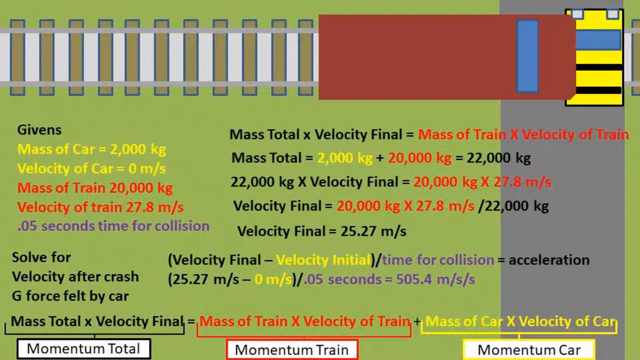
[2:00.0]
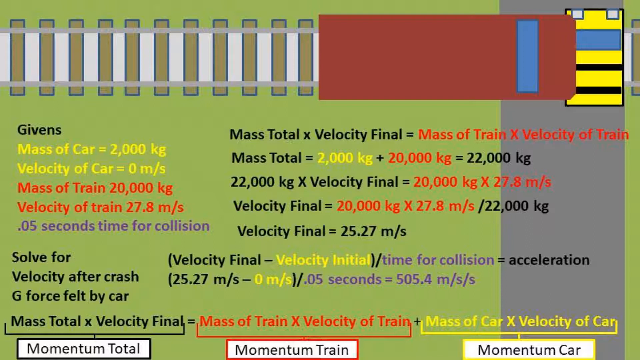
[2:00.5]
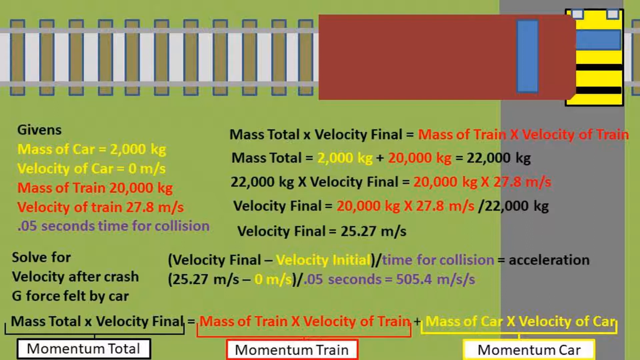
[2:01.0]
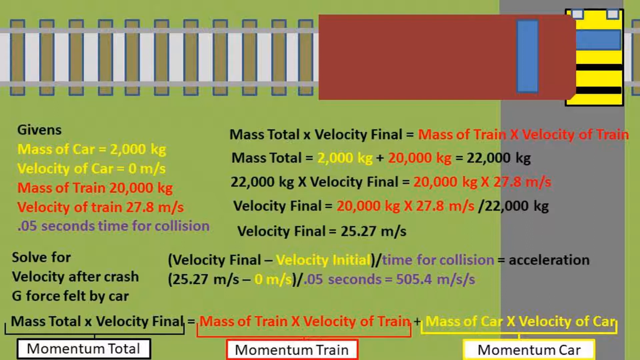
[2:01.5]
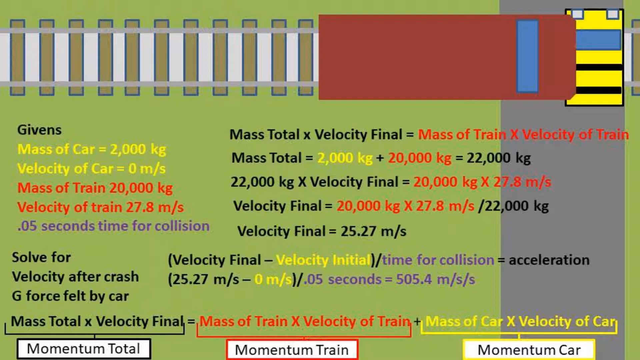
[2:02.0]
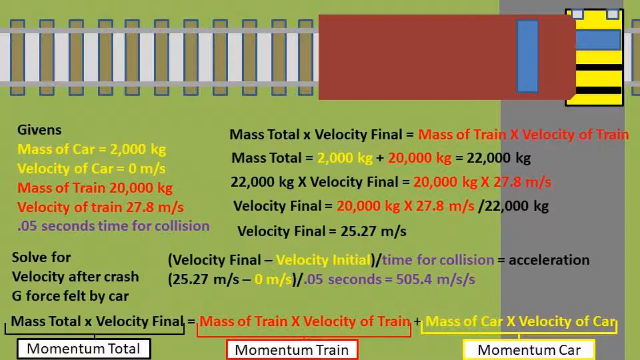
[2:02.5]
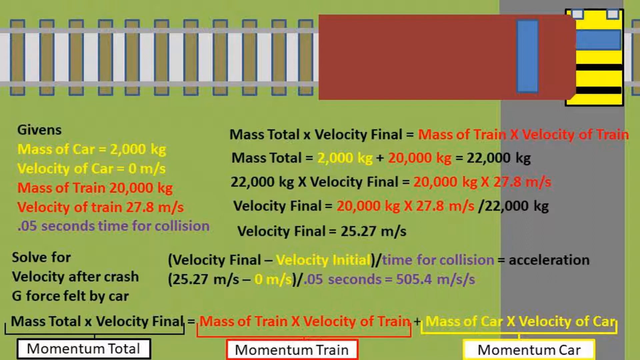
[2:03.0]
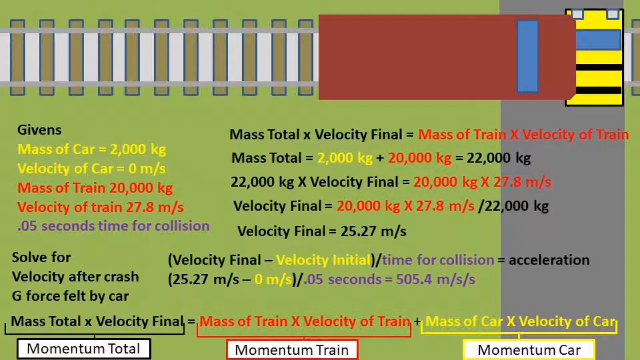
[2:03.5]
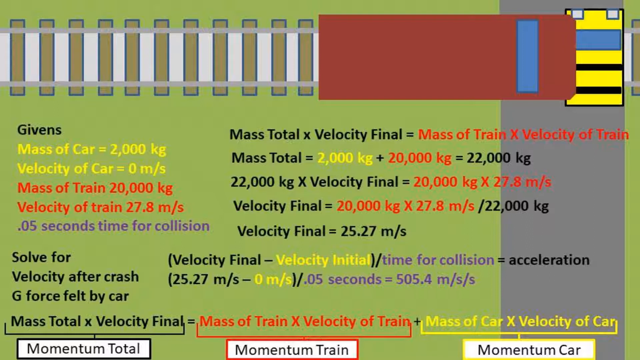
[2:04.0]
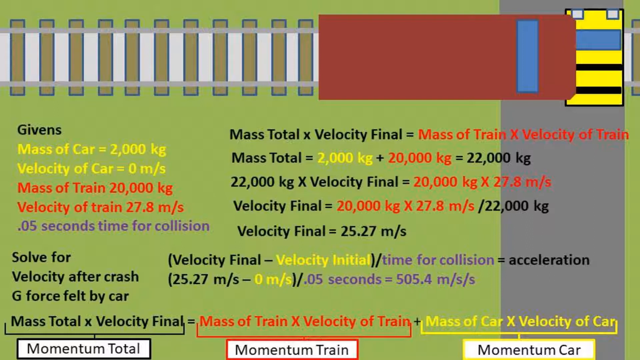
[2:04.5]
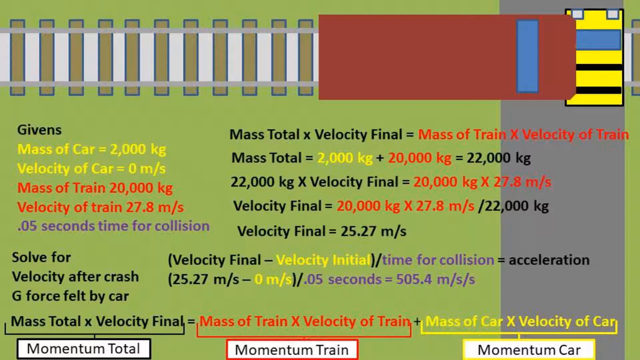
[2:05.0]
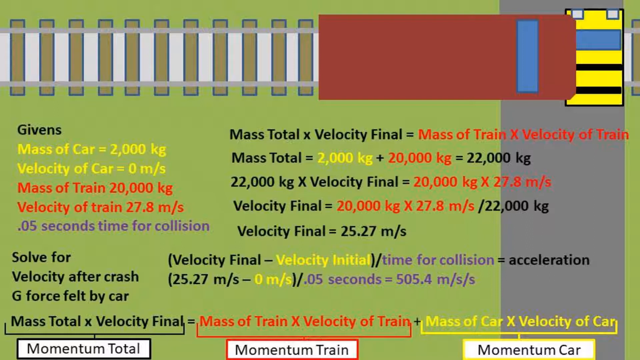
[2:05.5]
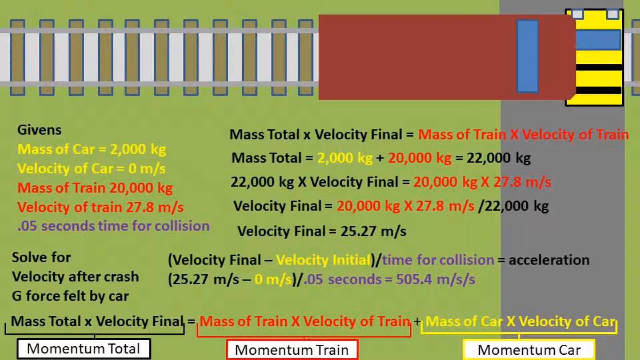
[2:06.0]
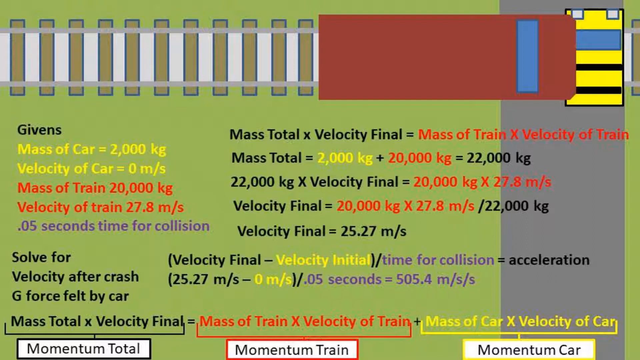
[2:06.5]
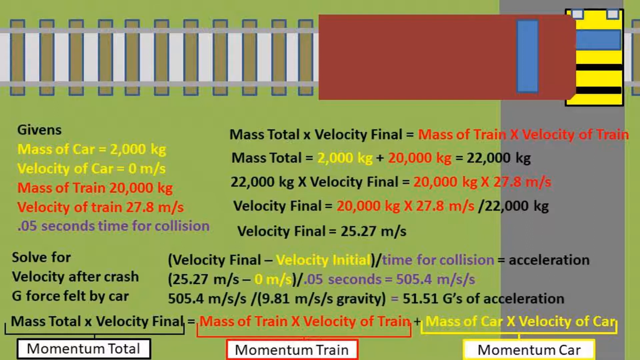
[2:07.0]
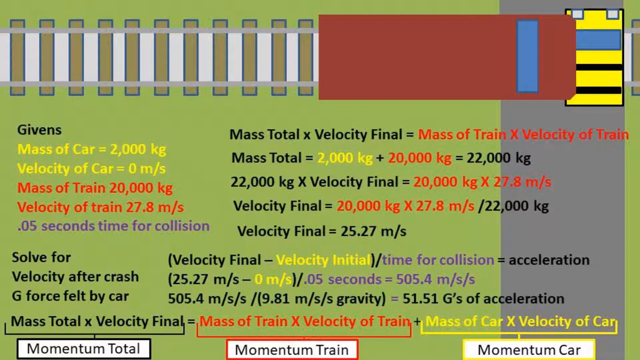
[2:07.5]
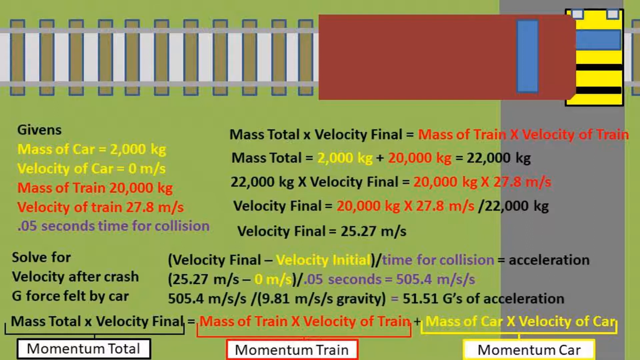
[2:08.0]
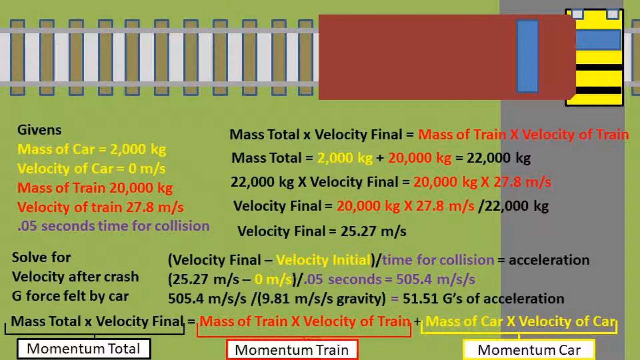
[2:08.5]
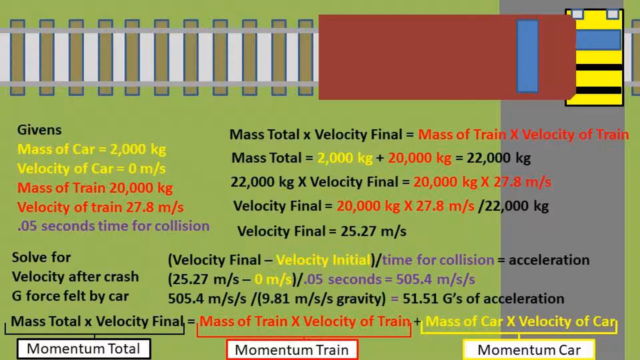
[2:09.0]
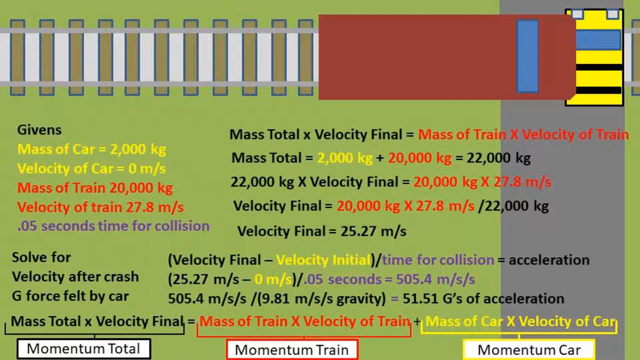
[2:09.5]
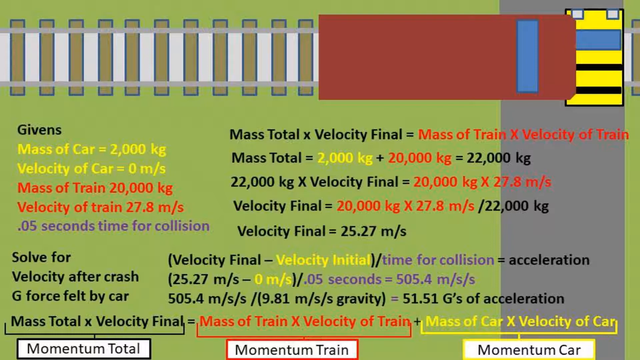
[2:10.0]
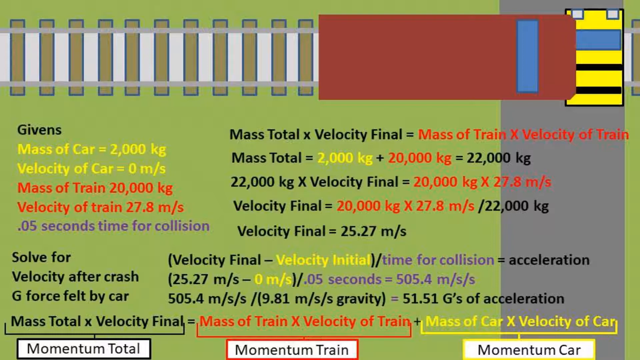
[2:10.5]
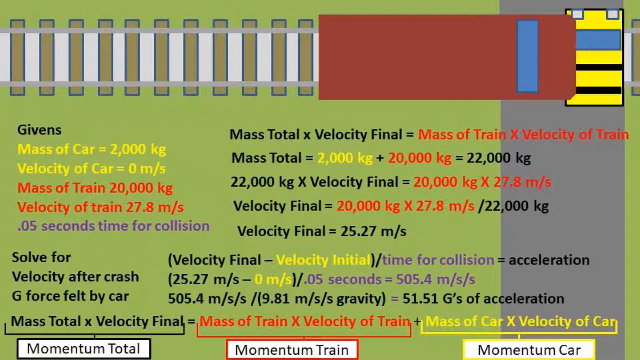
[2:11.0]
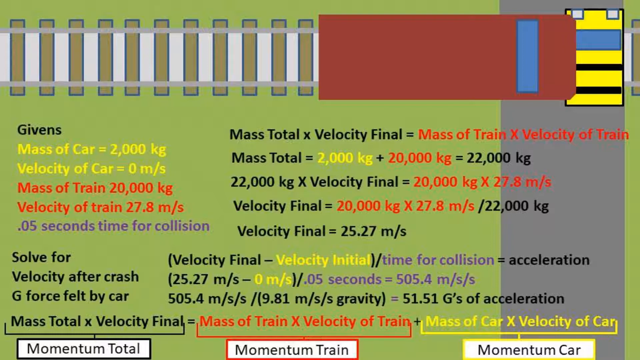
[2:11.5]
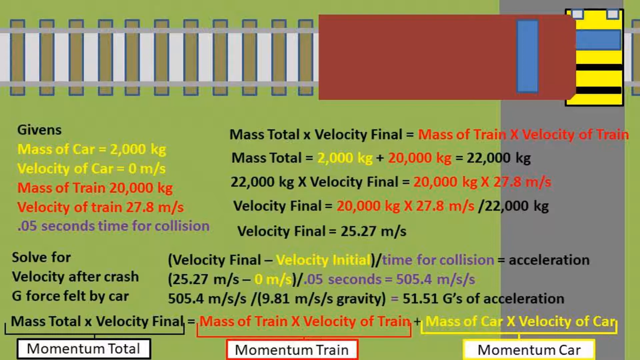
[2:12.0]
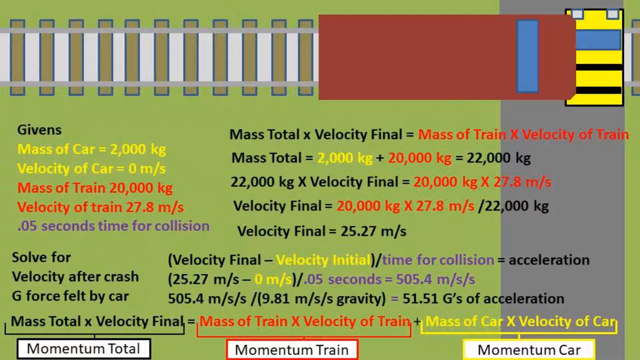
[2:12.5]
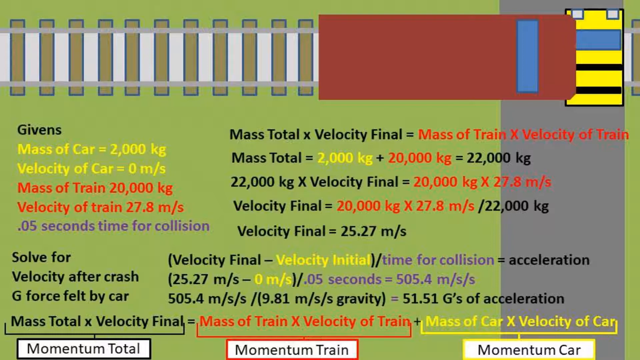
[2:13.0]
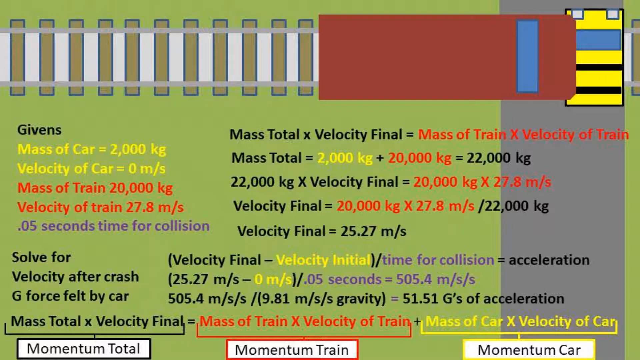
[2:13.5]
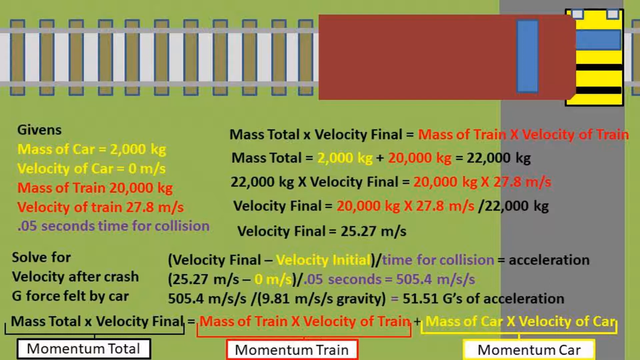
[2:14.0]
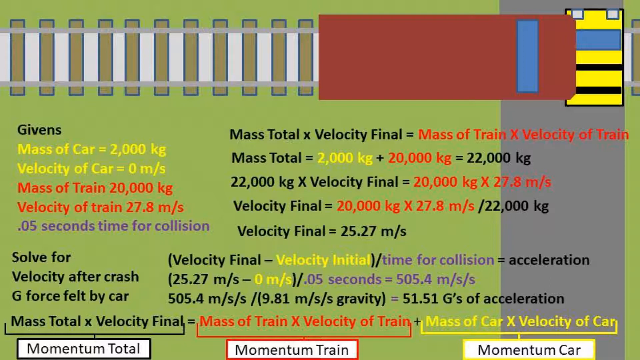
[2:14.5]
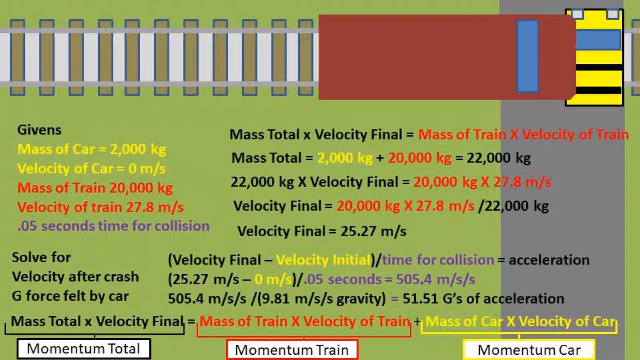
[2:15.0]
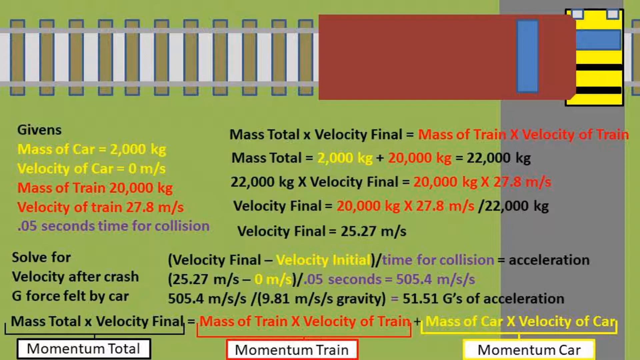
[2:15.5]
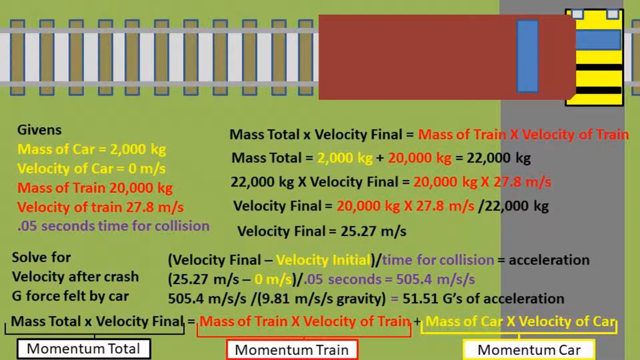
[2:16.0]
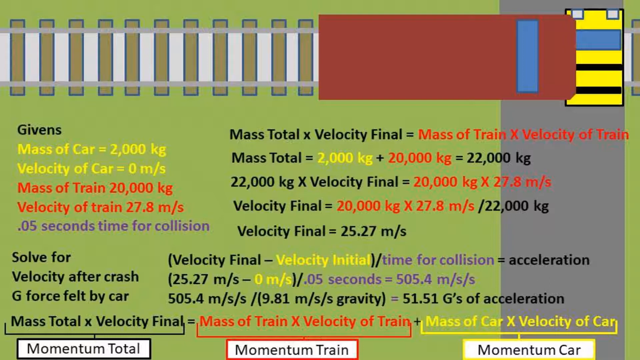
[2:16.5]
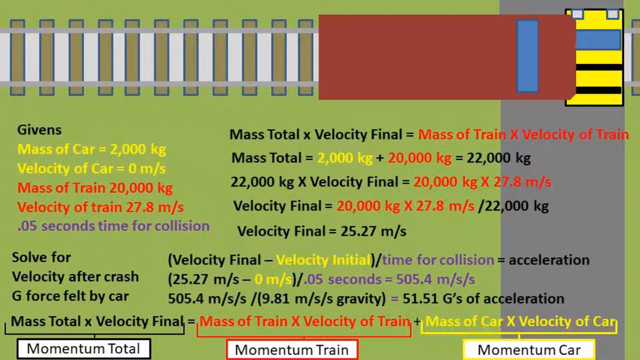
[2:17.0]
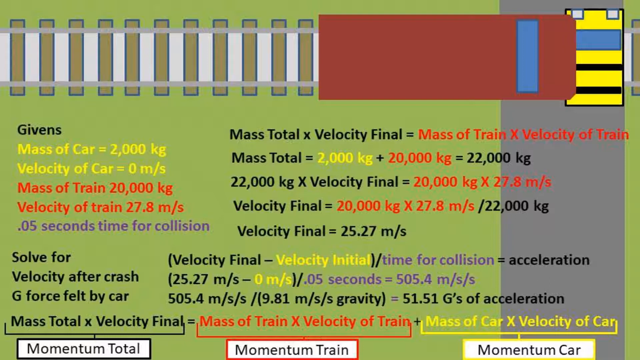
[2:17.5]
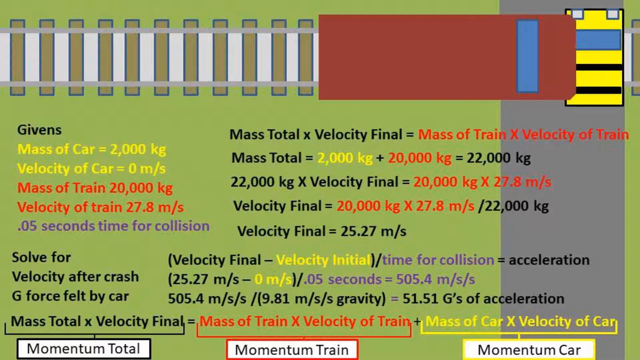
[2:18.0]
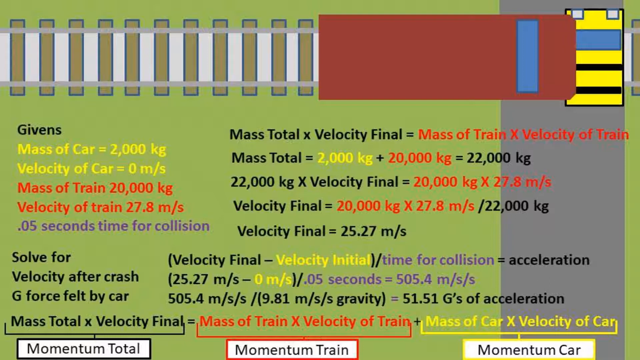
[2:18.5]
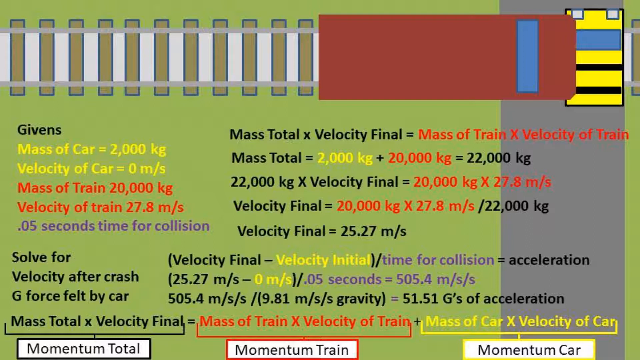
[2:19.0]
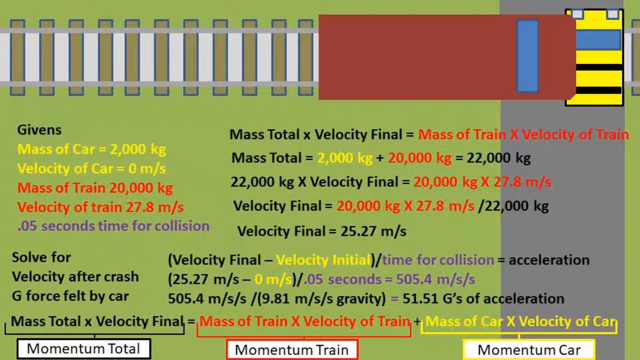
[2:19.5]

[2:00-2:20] A simplified diagram shows a car that has stopped on rail lines and a train that has hit it. Givens include the mass of the car, the velocity of the car, the mass of the train, and the velocity of the train, and the problem asks for the velocity after the crash and the g-force felt by the car. The total mass, the final velocity, and the acceleration formula are already worked out. The acceleration is then calculated as 51.51 g's. All the mathematical work is laid out step by step, with a consistent colour scheme in which variables are given unique colours that carry through wherever they reappear in the calculations.